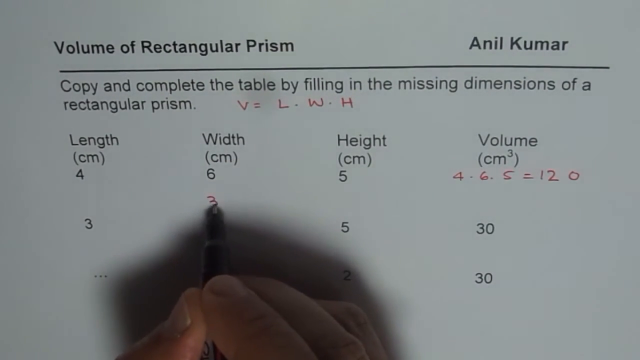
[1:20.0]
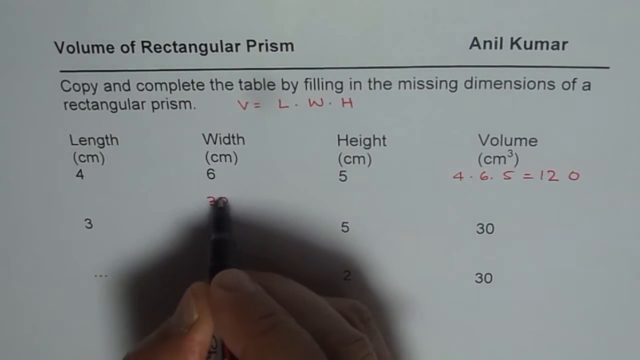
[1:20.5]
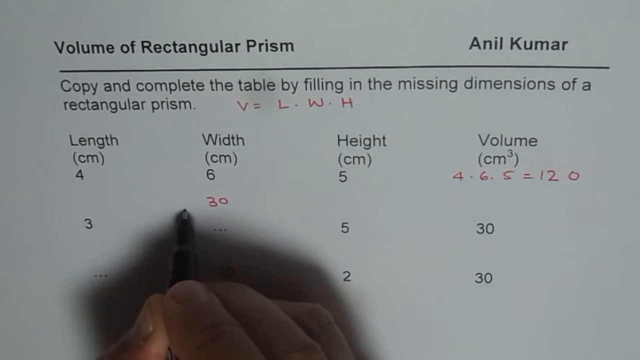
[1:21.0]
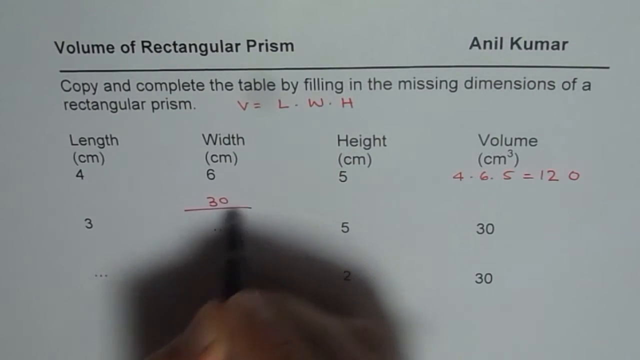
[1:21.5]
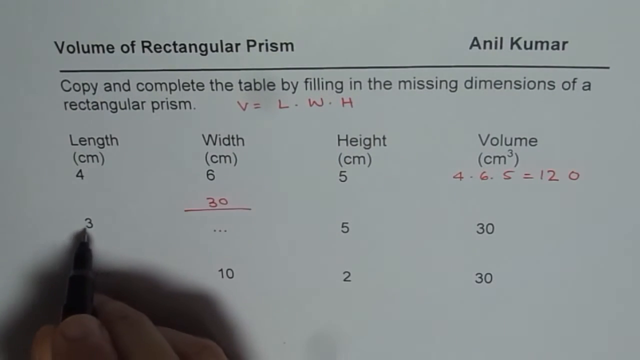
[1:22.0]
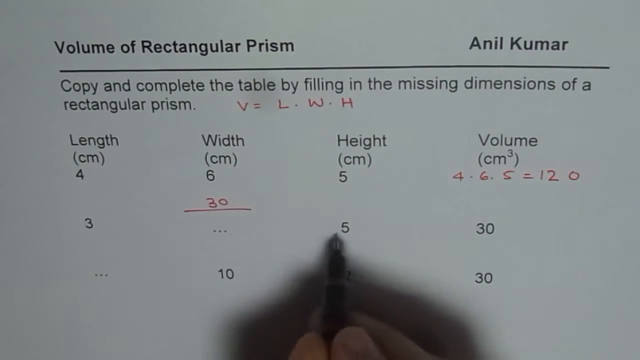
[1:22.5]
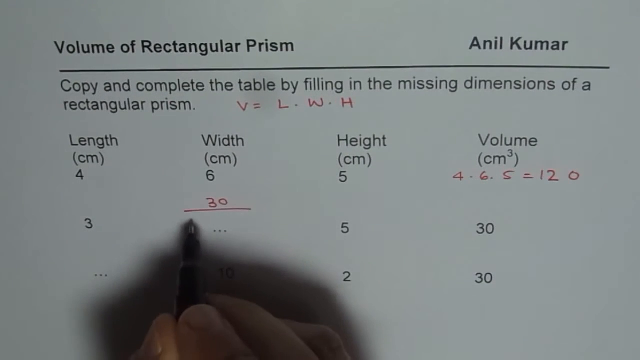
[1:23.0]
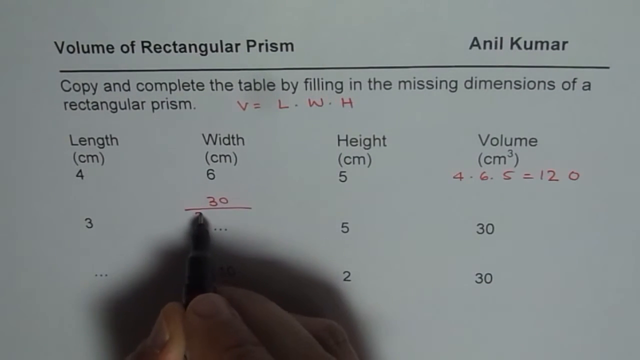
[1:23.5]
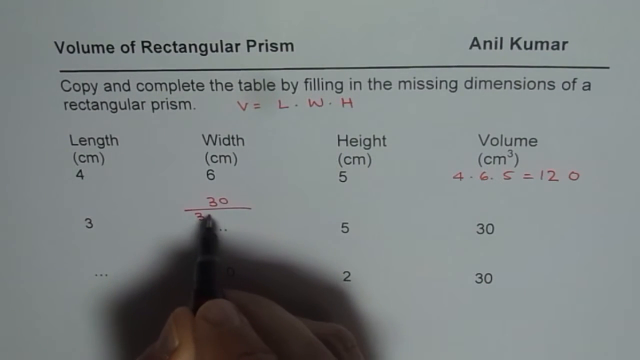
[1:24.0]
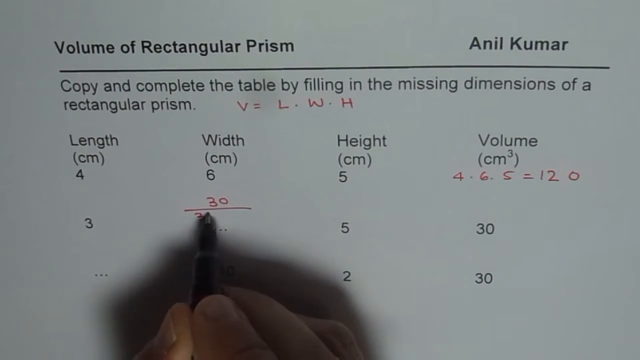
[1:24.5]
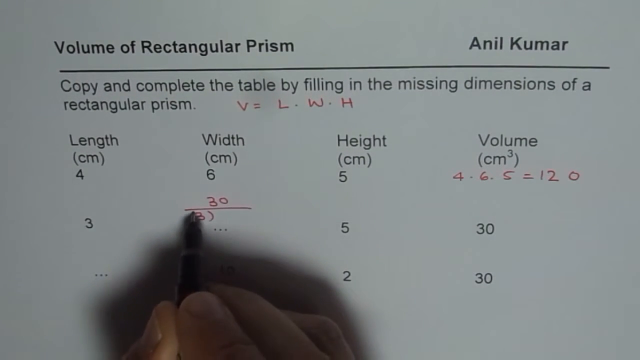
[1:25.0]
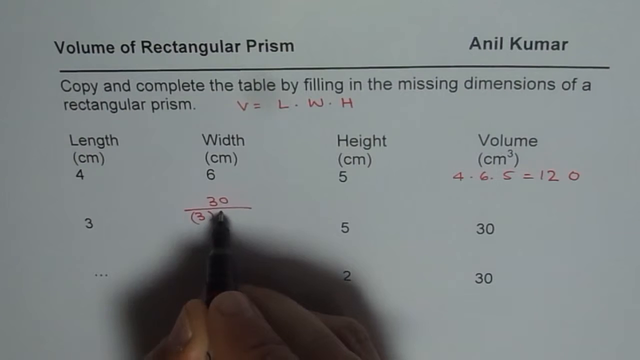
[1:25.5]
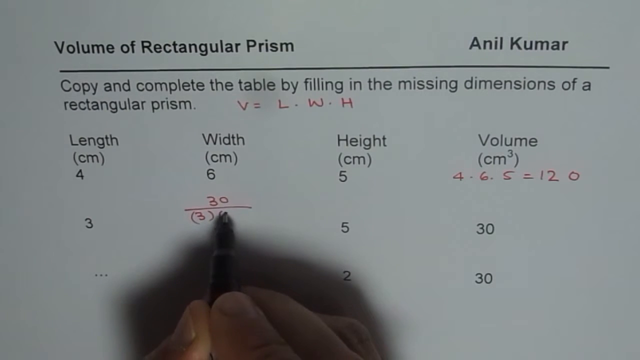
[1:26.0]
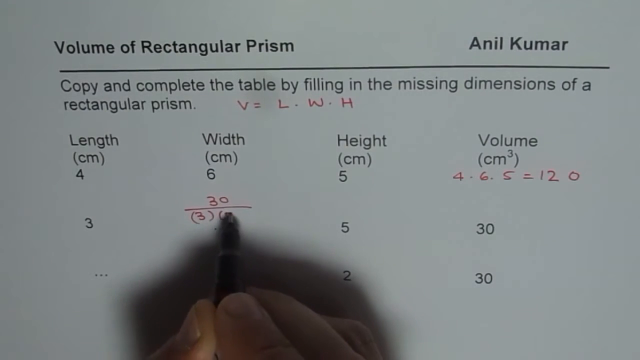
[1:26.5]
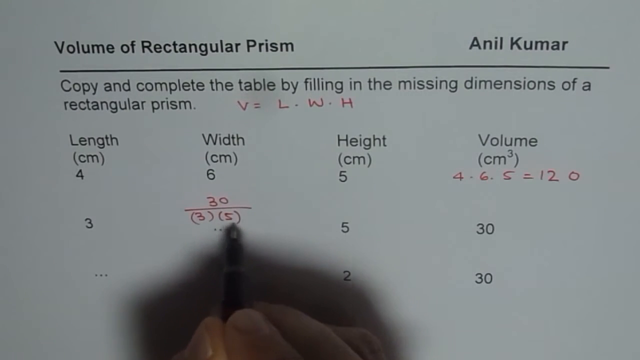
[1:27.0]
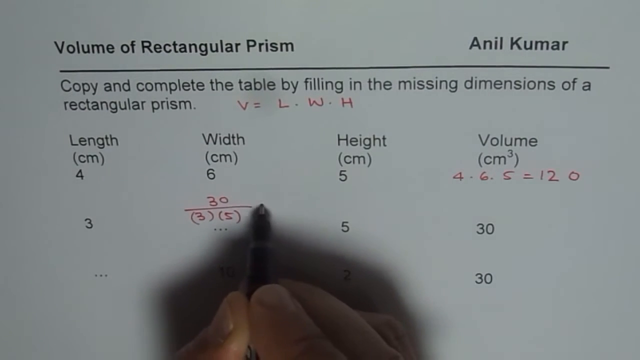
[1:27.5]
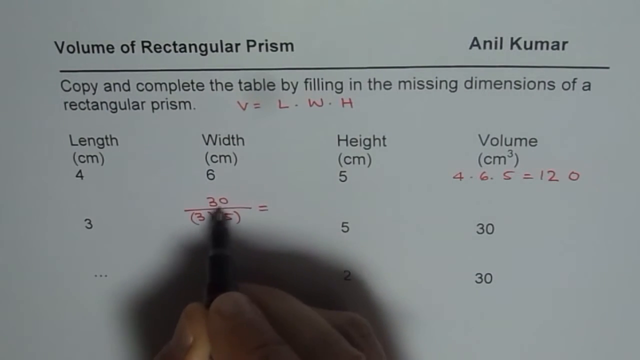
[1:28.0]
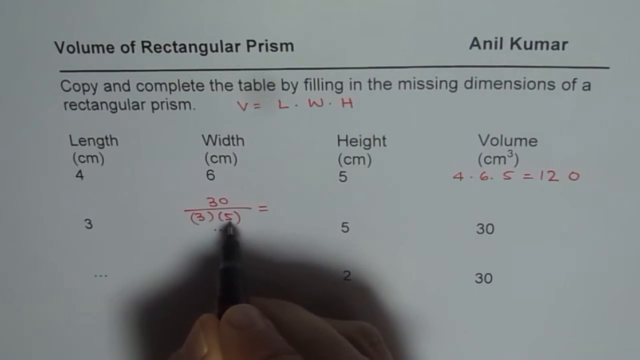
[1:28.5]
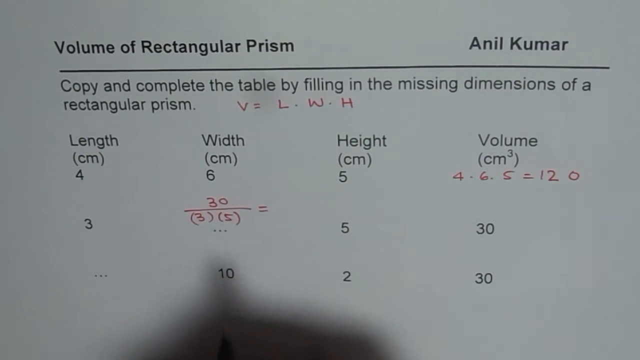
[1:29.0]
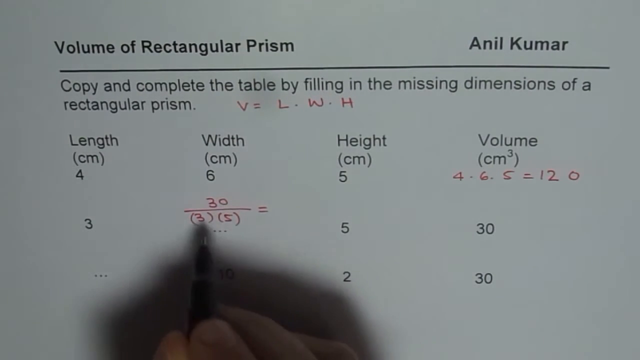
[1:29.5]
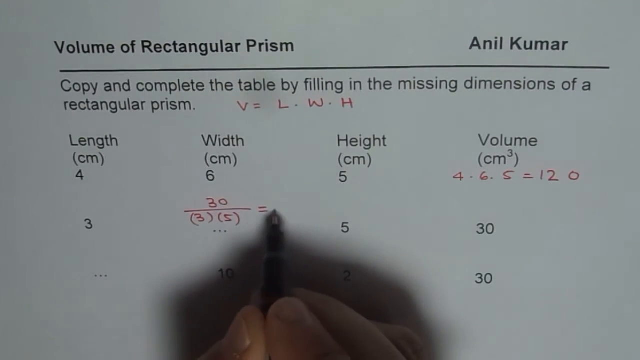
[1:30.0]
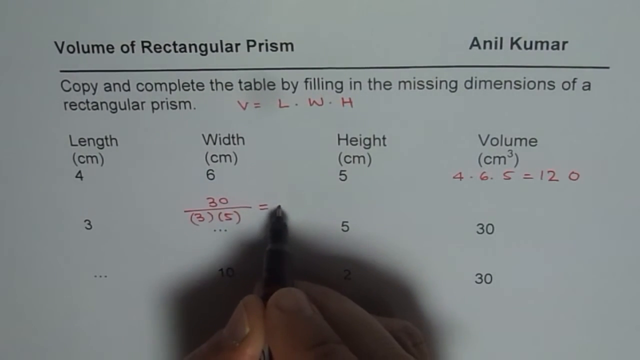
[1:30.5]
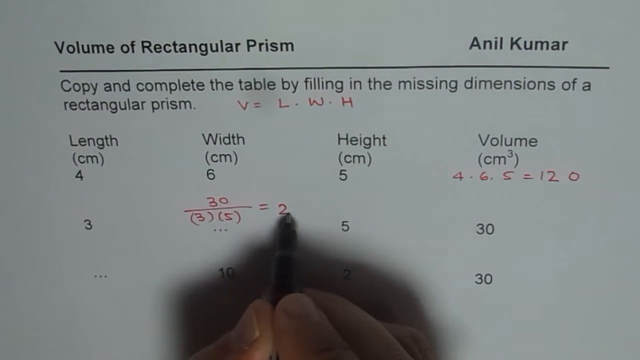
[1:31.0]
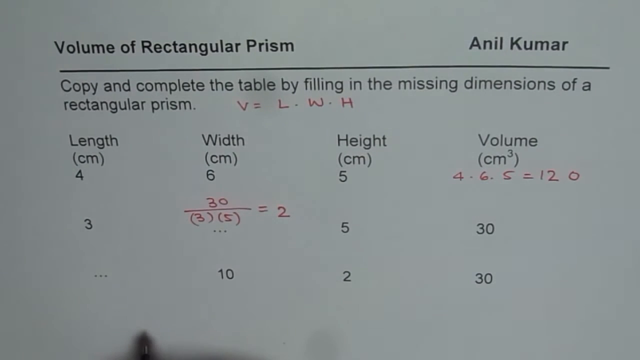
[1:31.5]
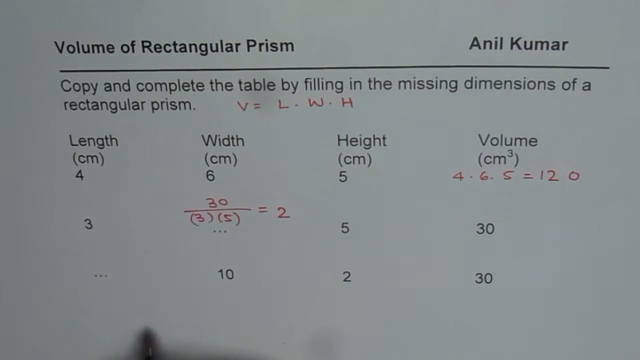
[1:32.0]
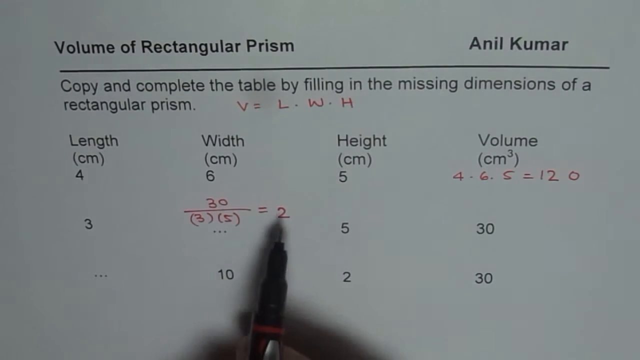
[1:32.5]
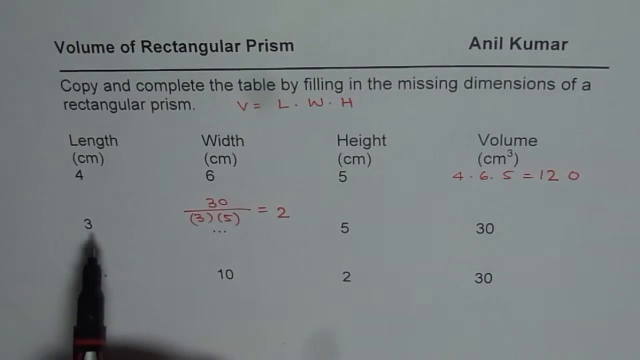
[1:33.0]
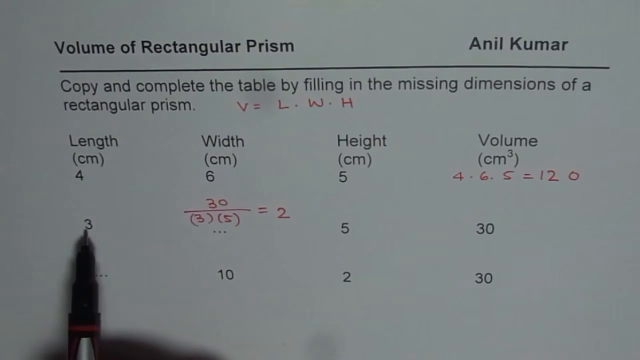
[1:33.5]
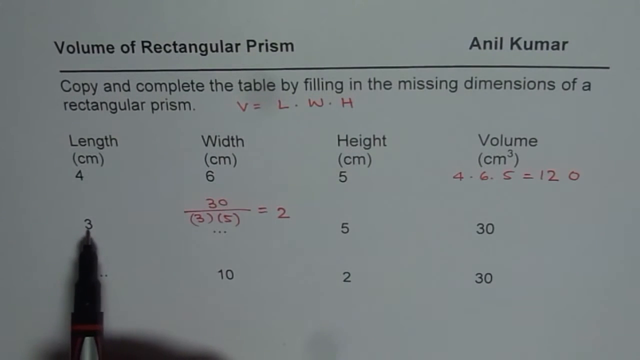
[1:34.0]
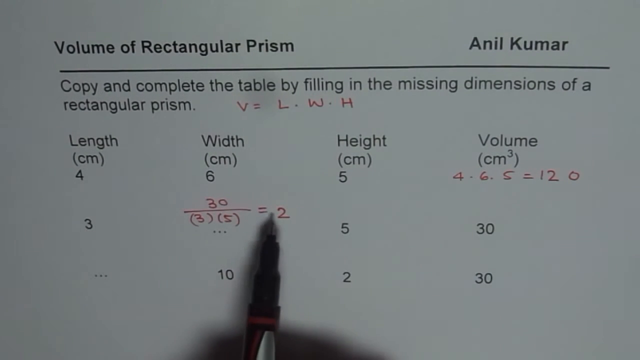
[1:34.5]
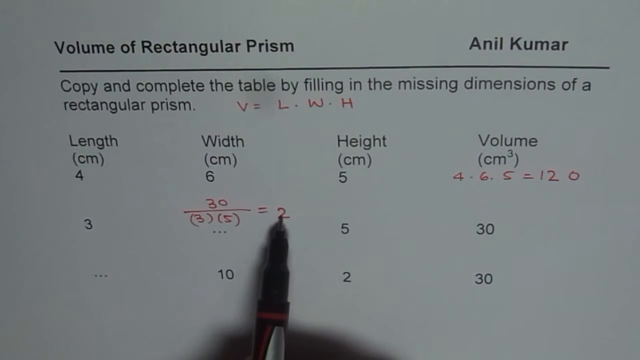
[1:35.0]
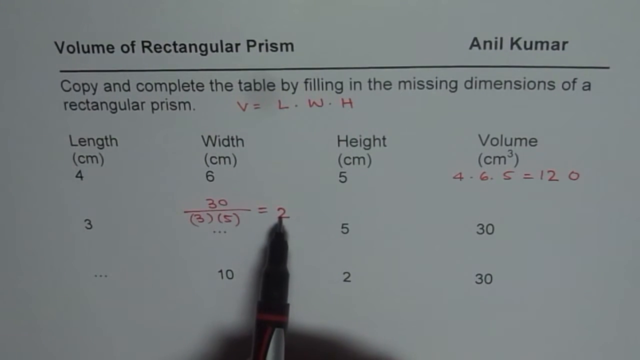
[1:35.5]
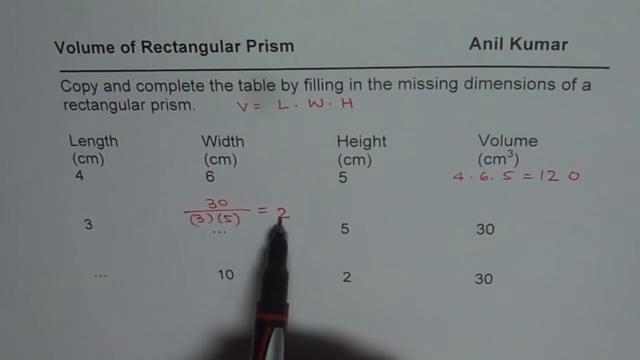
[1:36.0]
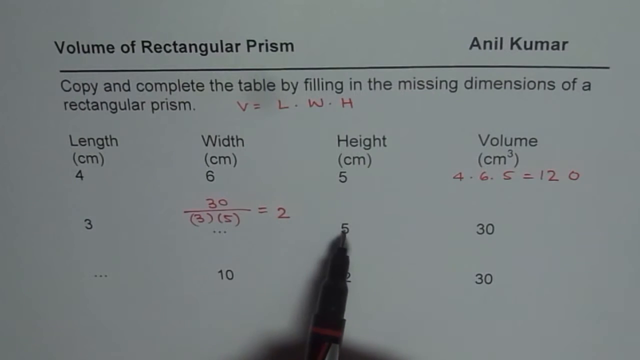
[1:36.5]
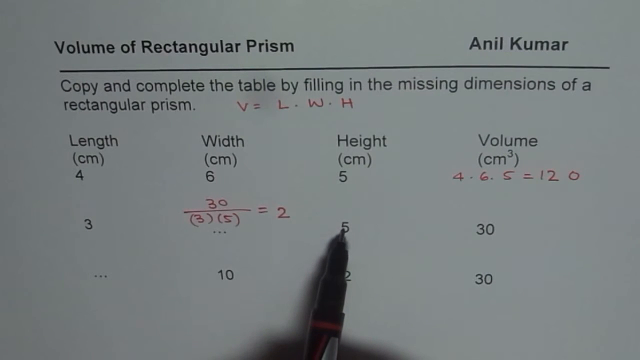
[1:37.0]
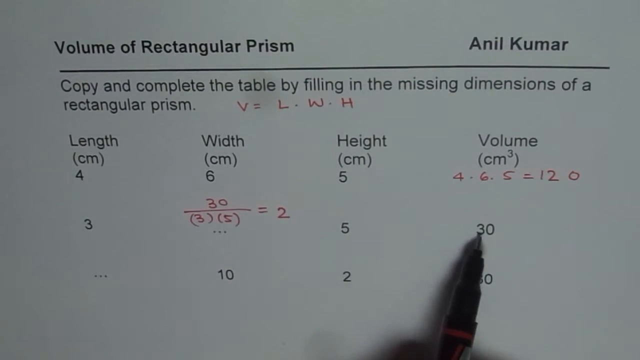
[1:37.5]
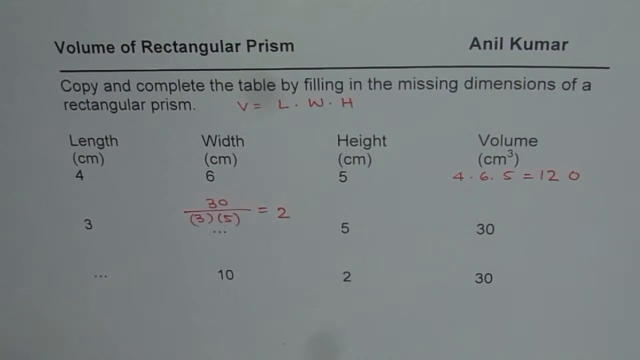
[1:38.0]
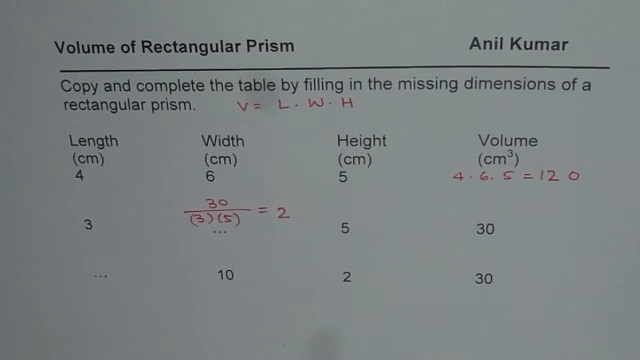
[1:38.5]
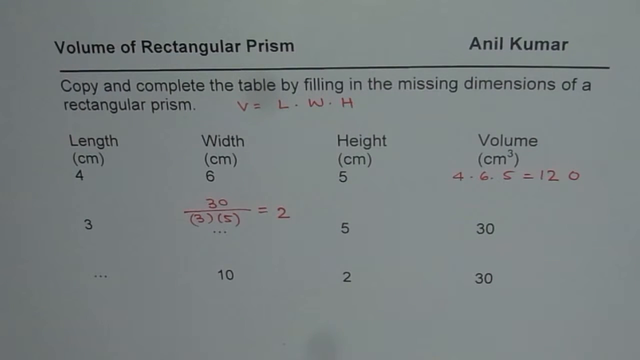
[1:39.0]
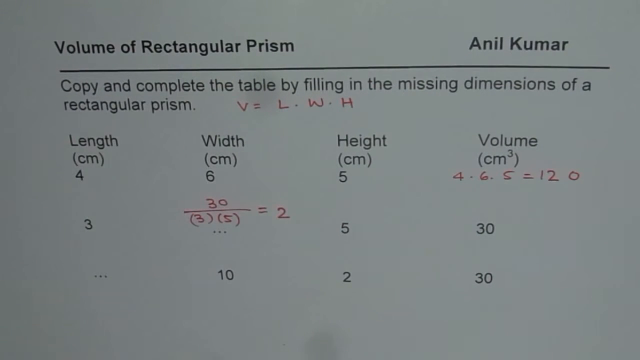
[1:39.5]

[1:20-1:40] In an overhead view, the person's right hand is visible, with fingers and thumb holding the pen. They write a 3 under the width column and then a 0, completing the number 30, and draw a line under the 30. They go to the length column and over to the height column, tapping between the numbers in the second rows, then return to the 30 and write a 3 underneath the line in parentheses, with another set of parentheses containing a 5 next to it, so it reads 30 over (3)(5). To the right they write an equal sign and the number 2. The pen moves down toward the bottom left corner of the page, back up to the 2, and then to the left, back to the length column, where they tap the 3 in the second row.